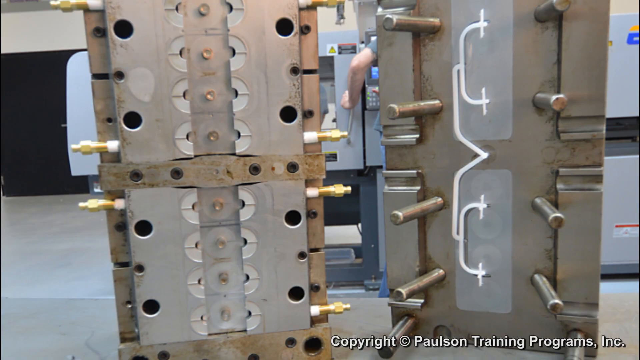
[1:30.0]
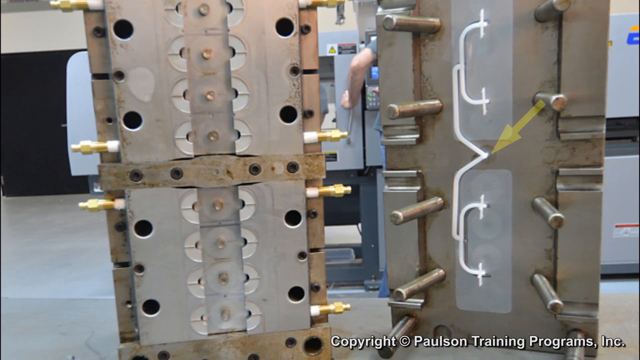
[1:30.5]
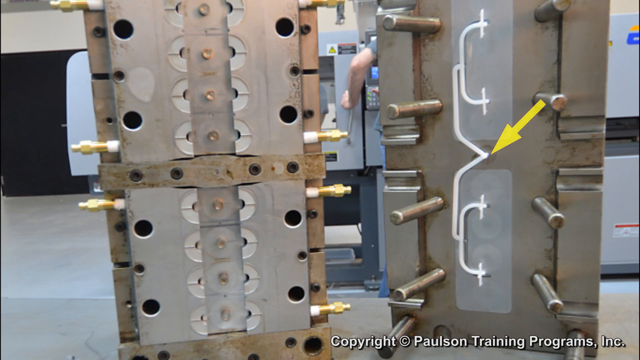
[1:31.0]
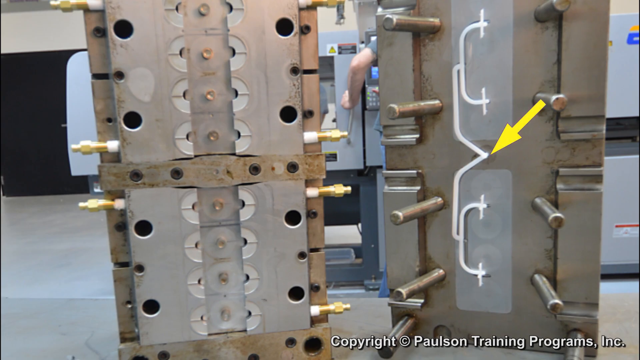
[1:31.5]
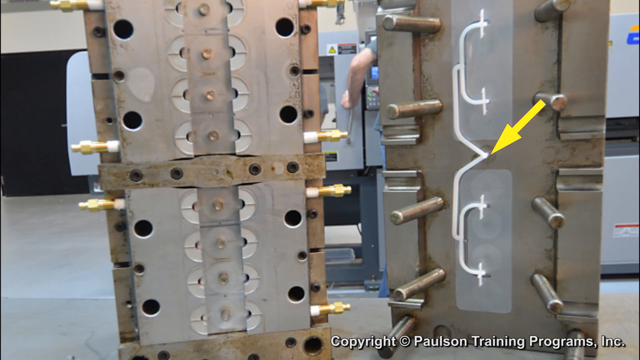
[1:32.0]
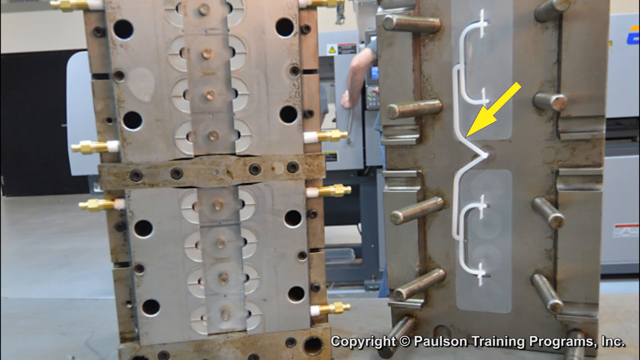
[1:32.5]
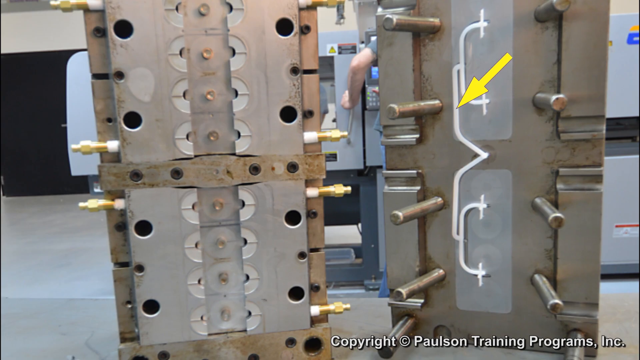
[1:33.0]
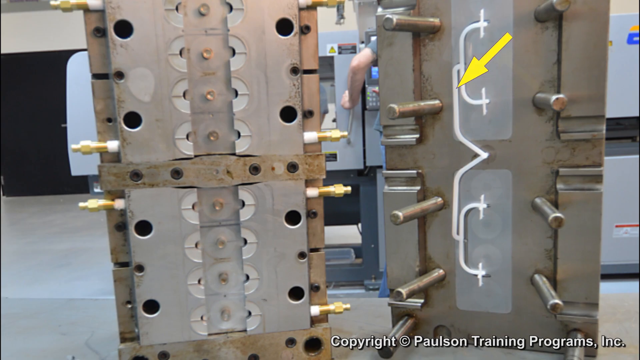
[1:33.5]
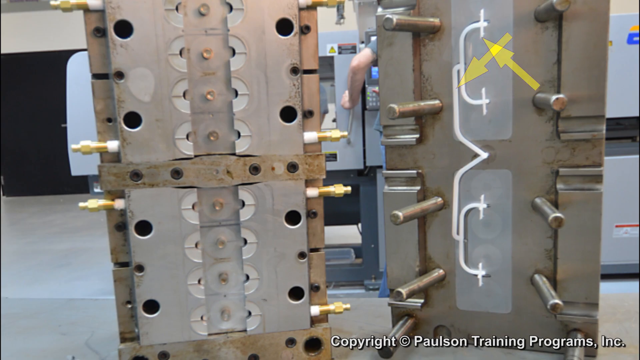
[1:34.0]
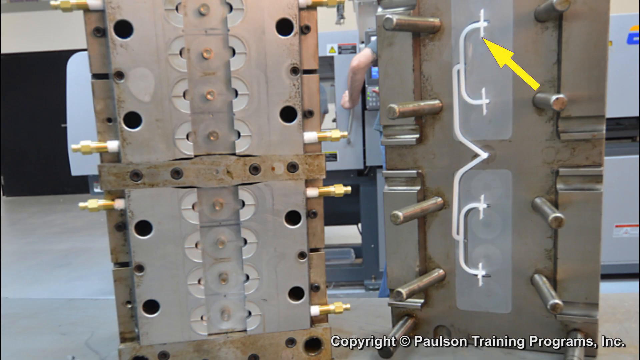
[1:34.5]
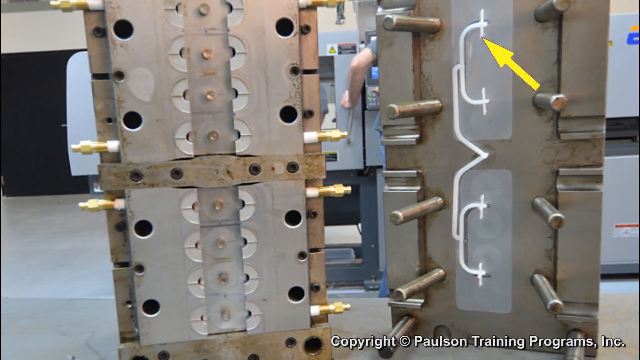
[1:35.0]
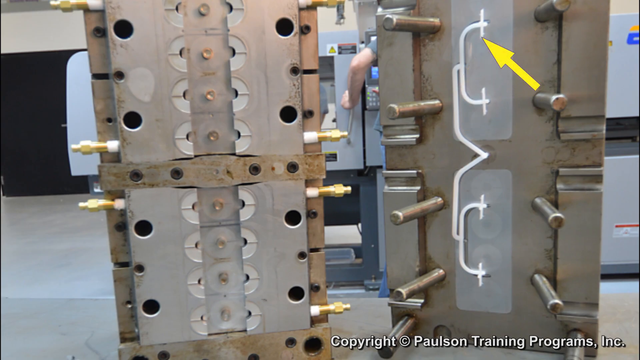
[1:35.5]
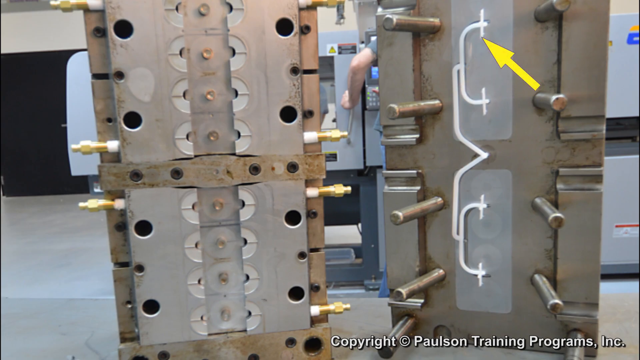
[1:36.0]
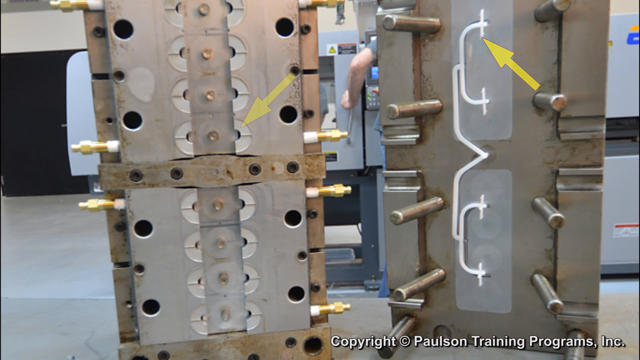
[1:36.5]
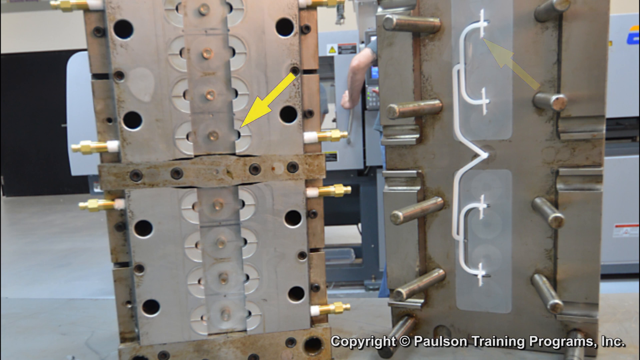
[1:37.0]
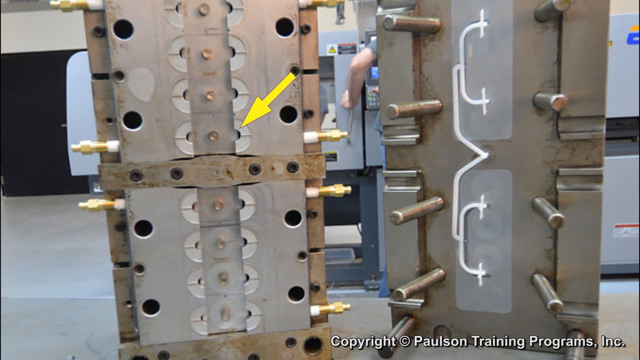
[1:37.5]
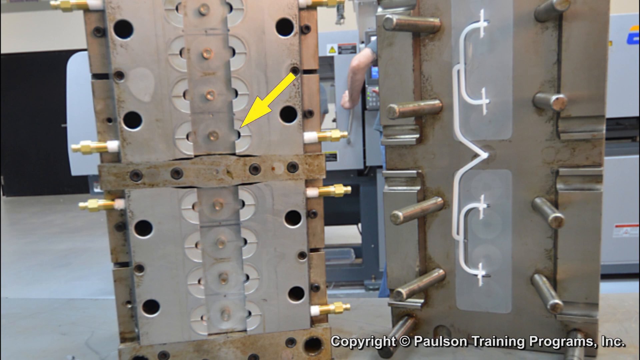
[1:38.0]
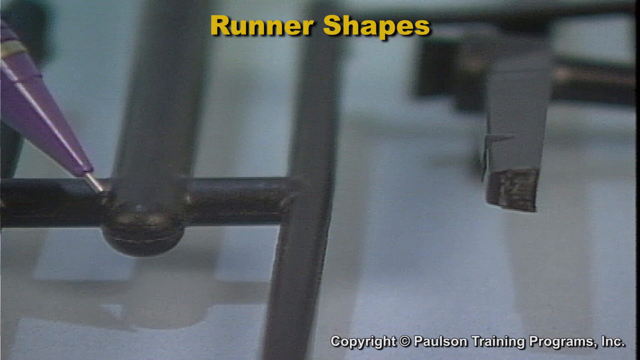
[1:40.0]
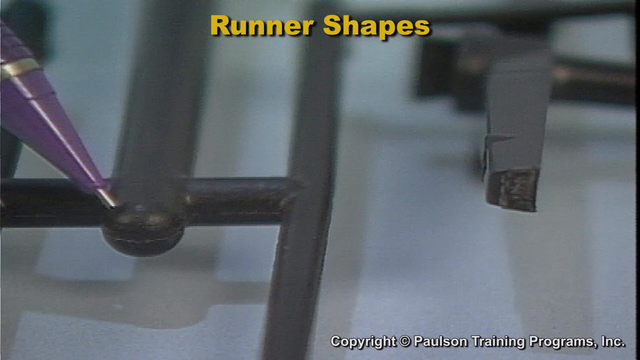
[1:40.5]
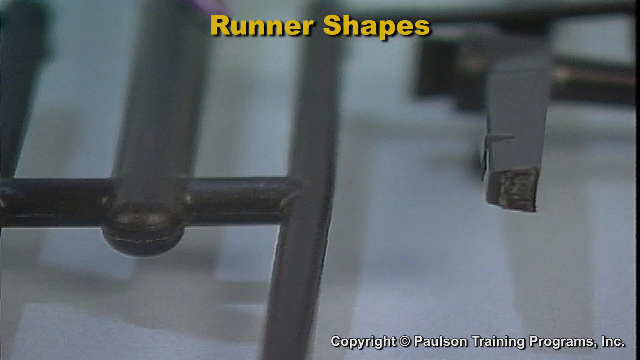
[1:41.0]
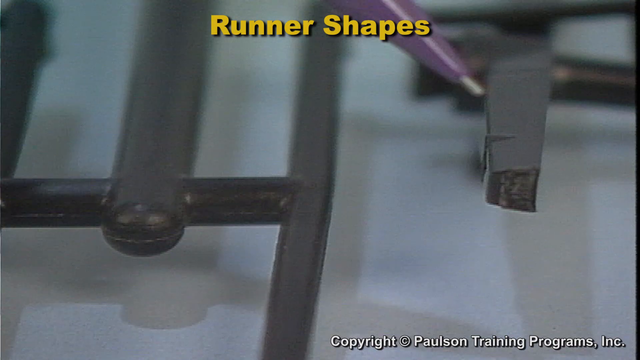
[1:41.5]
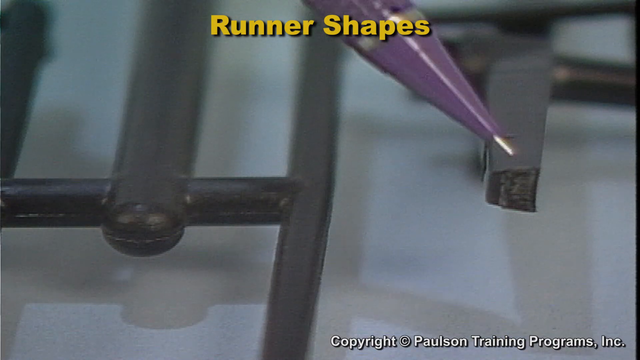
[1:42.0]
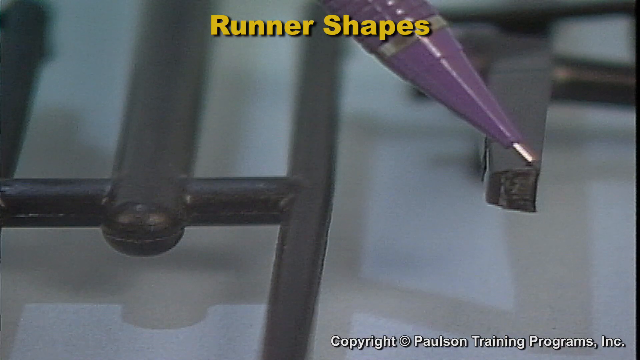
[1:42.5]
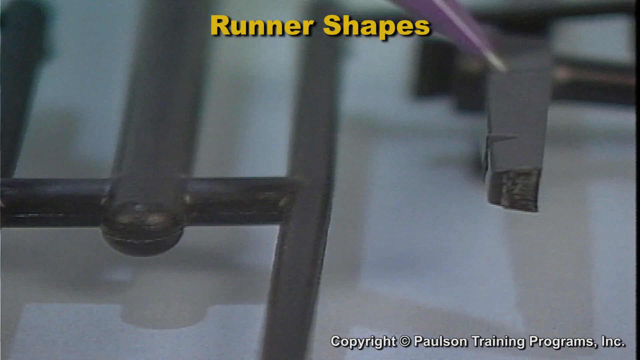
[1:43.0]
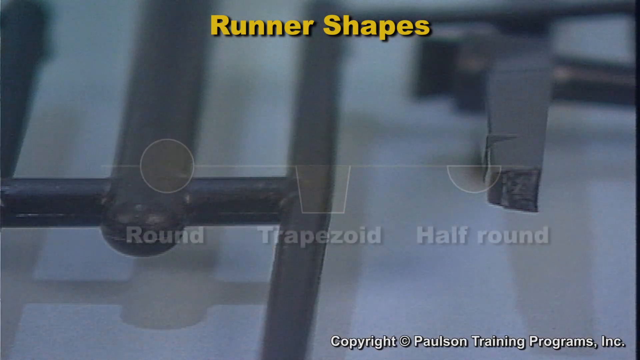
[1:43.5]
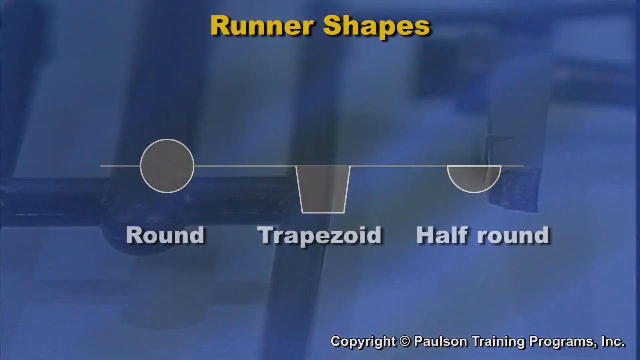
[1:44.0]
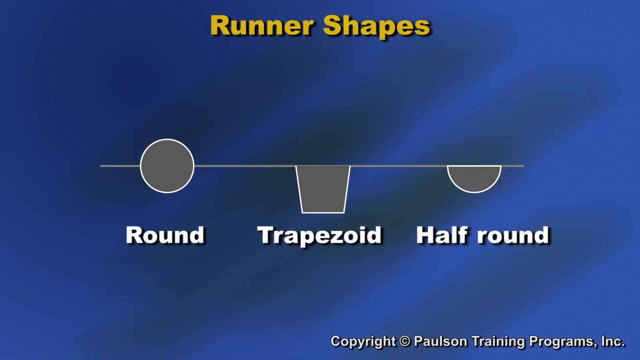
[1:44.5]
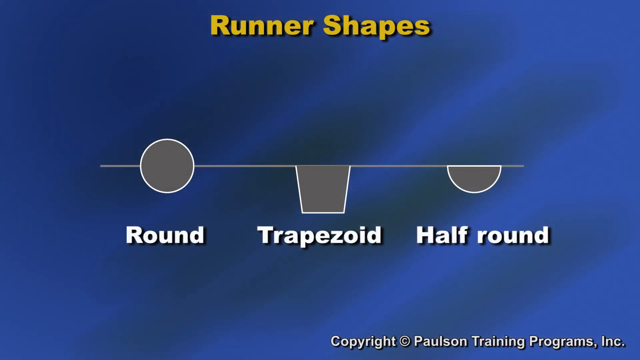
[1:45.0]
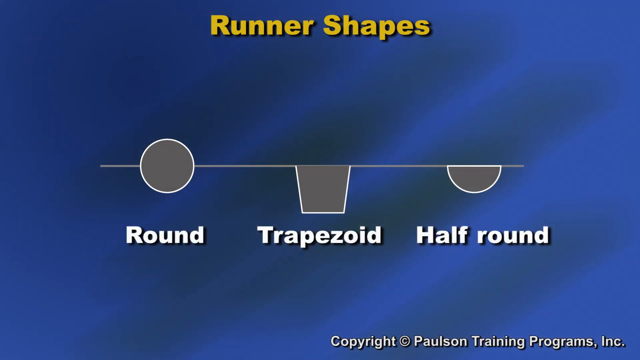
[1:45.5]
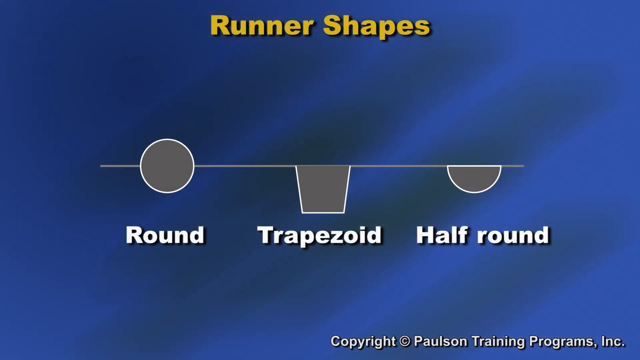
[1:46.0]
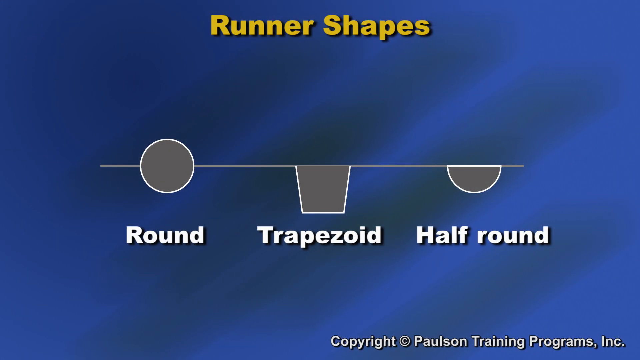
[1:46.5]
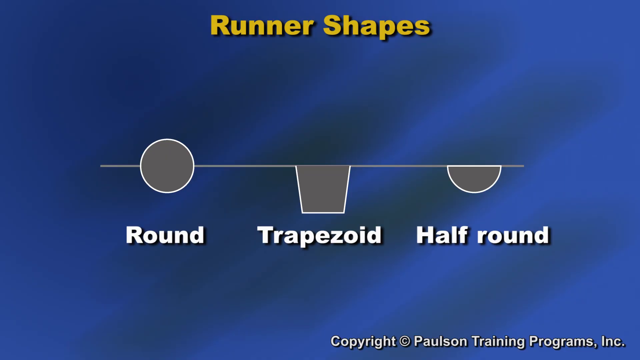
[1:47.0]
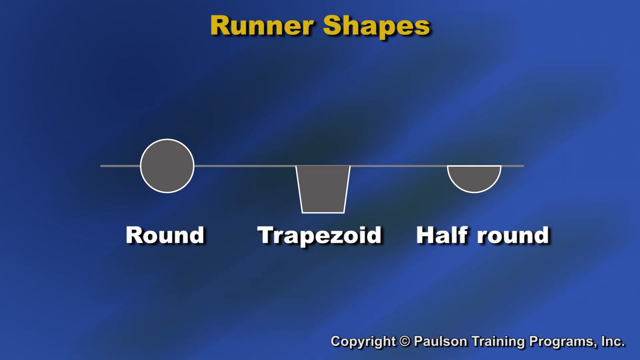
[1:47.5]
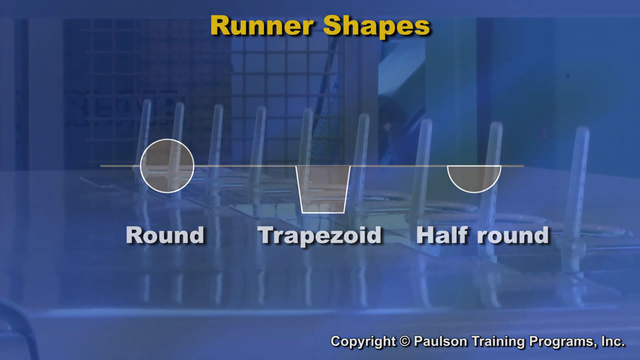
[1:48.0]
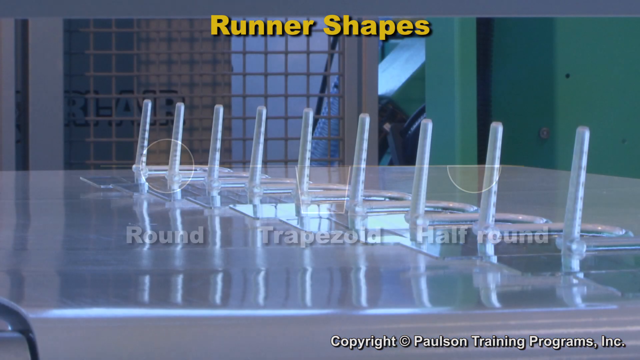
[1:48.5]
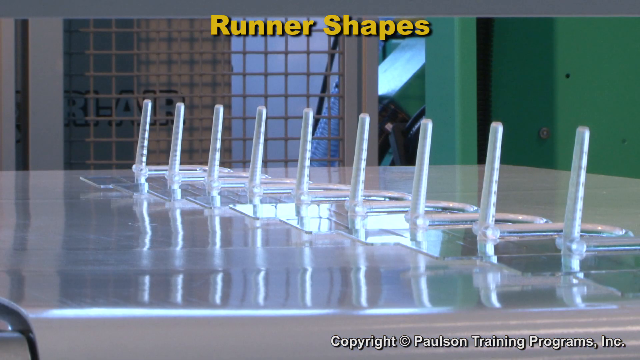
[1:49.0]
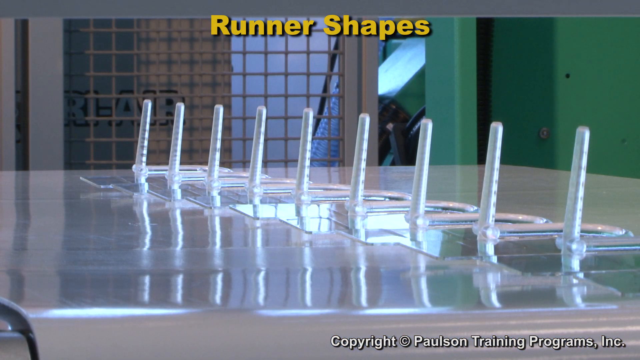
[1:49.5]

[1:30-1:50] A yellow arrow extends from the right half of the device, pointing down to an area in the center where what appears to be white tubing runs up and down. The yellow arrow traces the white tubing, which is identified as runners. A diagram with a blue background says "runner shapes" and shows three shapes: round, trapezoid and half round. On the left half of the mold, which has no runners, there appear to be seven visible nozzles with connectors, to which hoses are perhaps connected, possibly allowing coolant to pass through.